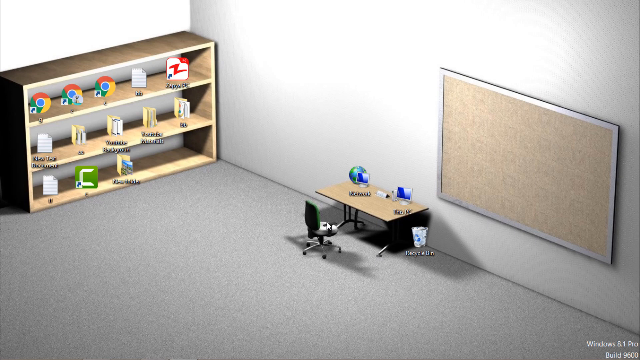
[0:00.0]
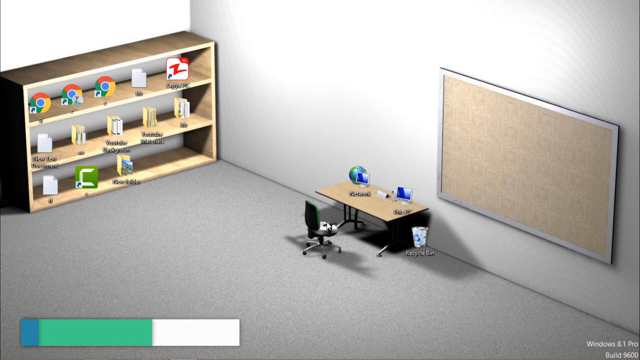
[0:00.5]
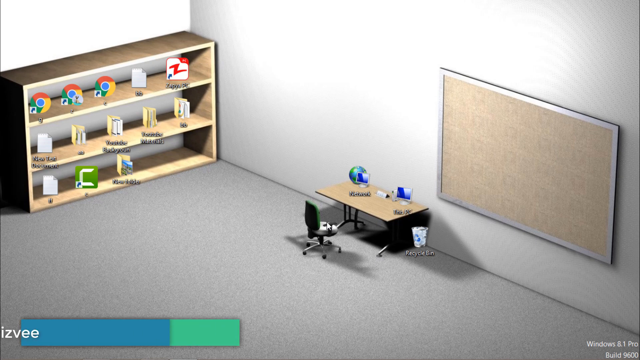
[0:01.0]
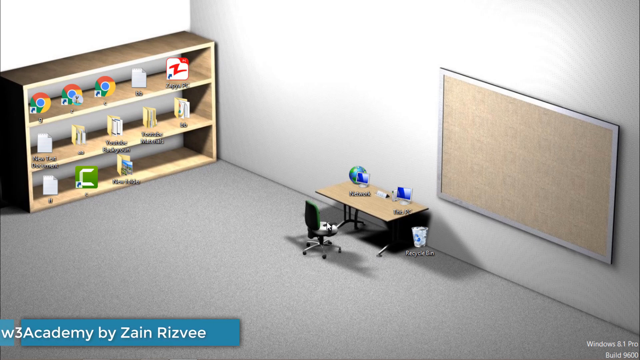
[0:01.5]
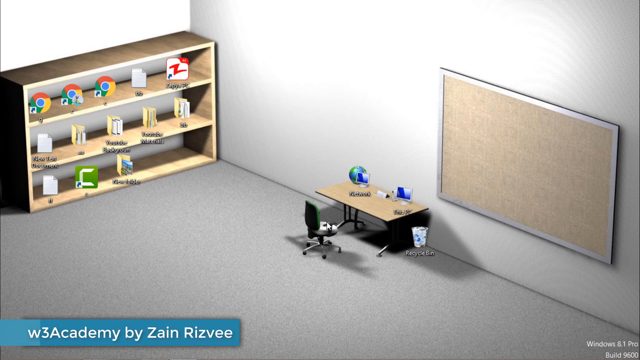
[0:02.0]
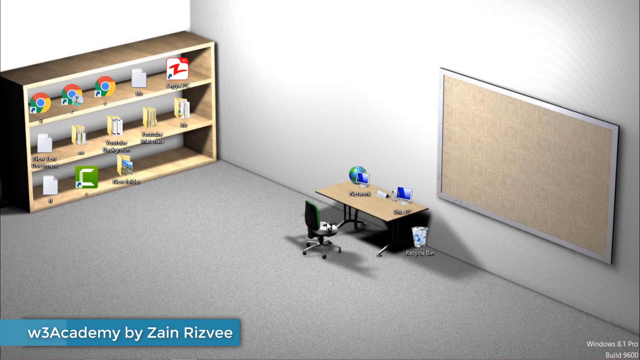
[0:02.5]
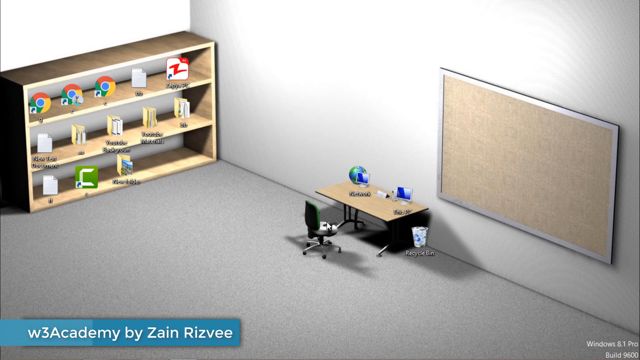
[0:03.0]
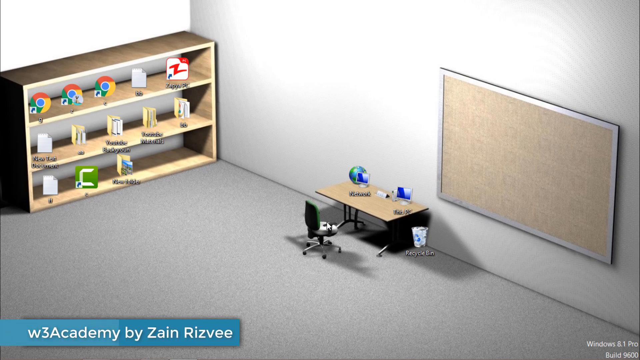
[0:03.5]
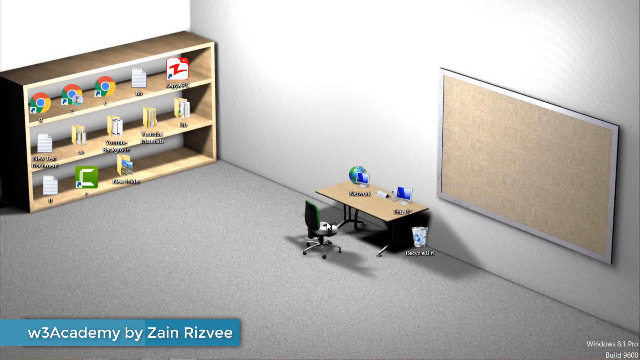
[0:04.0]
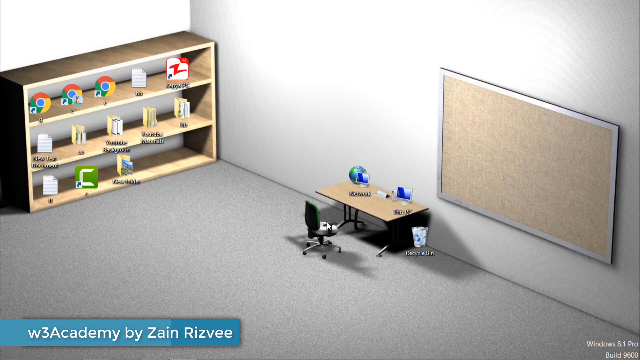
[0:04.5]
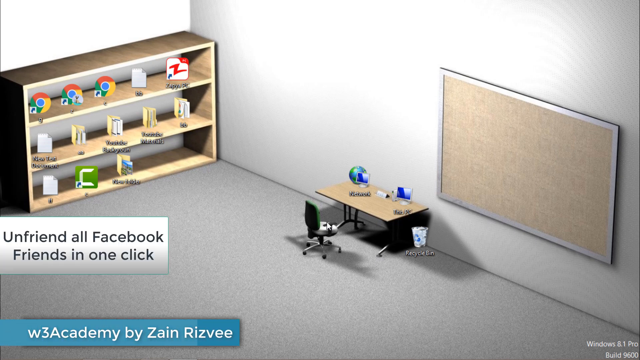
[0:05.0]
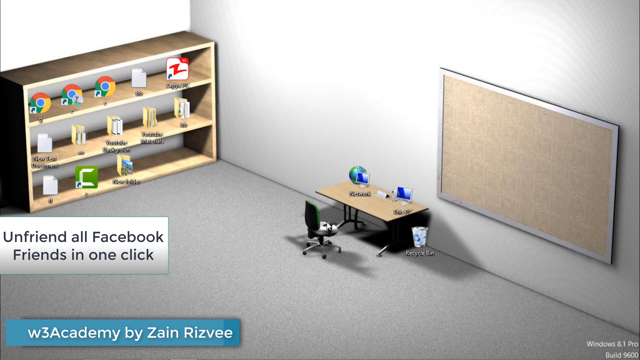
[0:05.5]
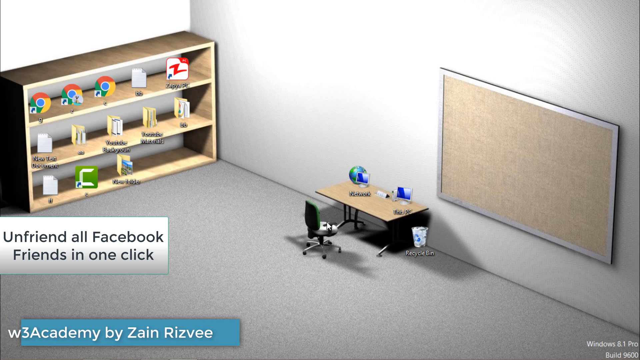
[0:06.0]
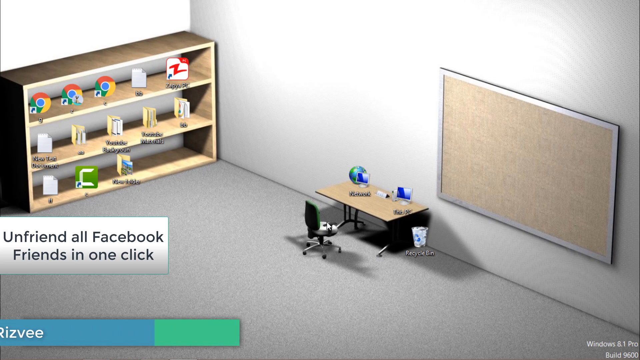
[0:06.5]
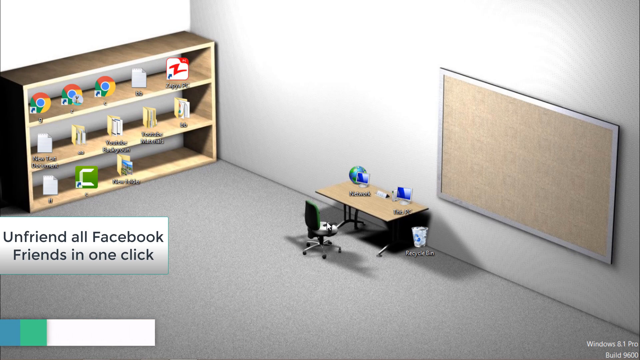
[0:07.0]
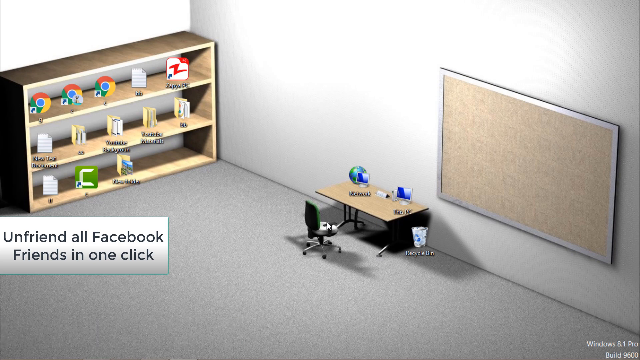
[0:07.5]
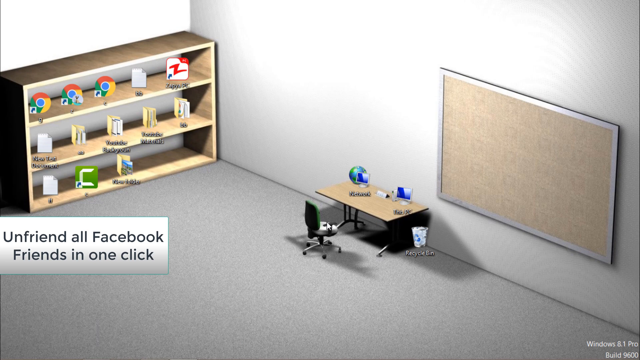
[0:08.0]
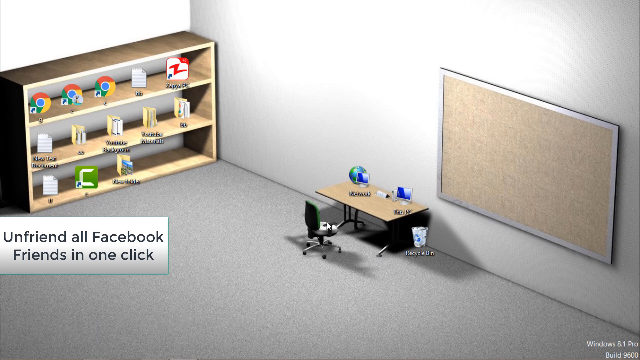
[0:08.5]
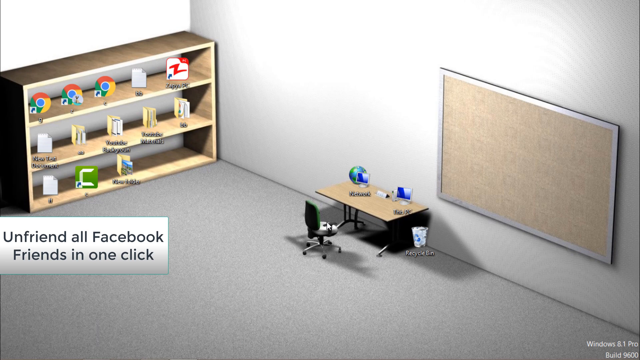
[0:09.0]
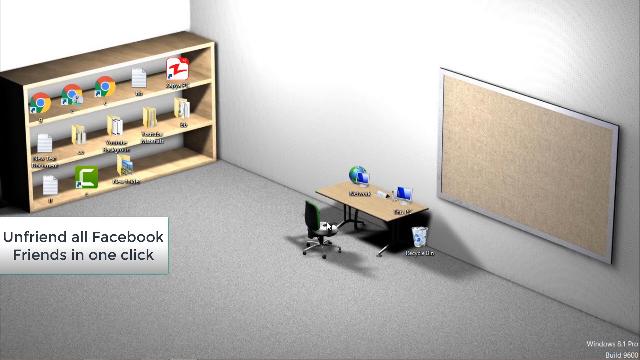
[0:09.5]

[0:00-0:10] An animated scene shows what looks like a classroom or something similar. A desk is against the wall, with two monitors on it, and there is a bulletin board. A shelf holds icons, including Google Chrome, and apparently a lot of folder documents. The room has gray carpet and white walls. On-screen text reads "unfriend all Facebook friends at one click." A recycle bin on the ground is used like a trash can, and there is a little globe icon and a green and white computer chair.